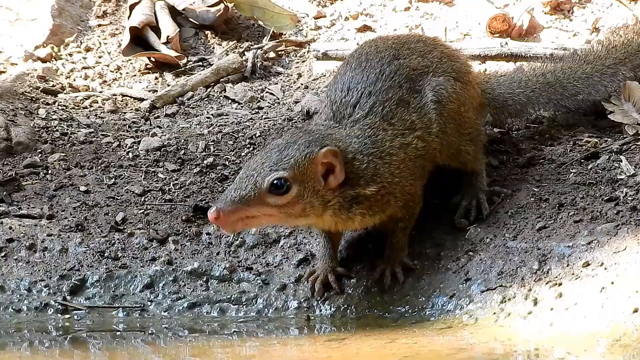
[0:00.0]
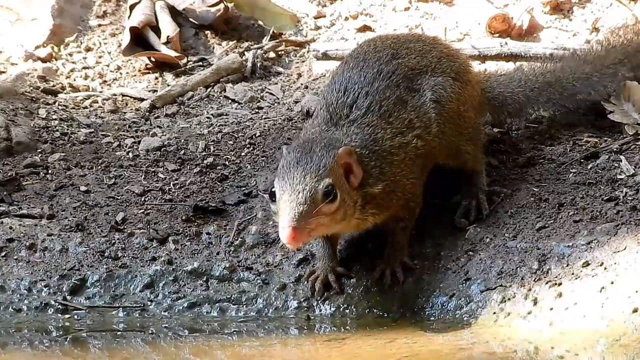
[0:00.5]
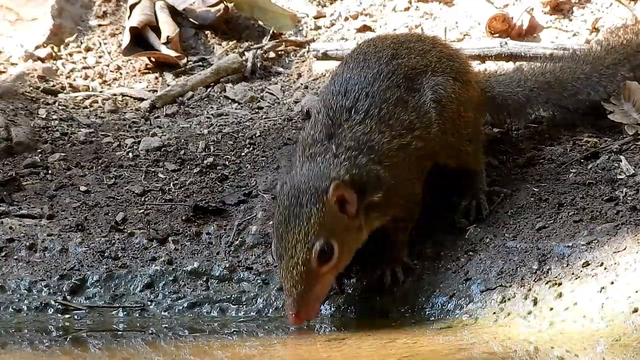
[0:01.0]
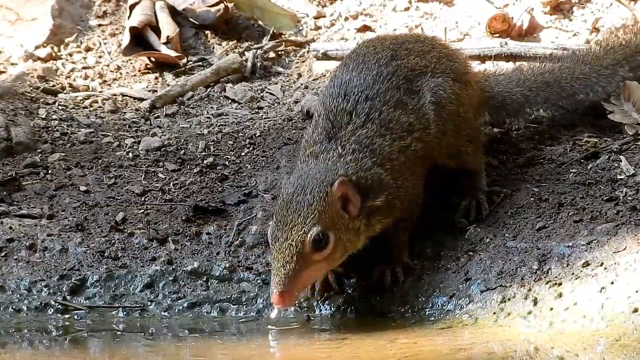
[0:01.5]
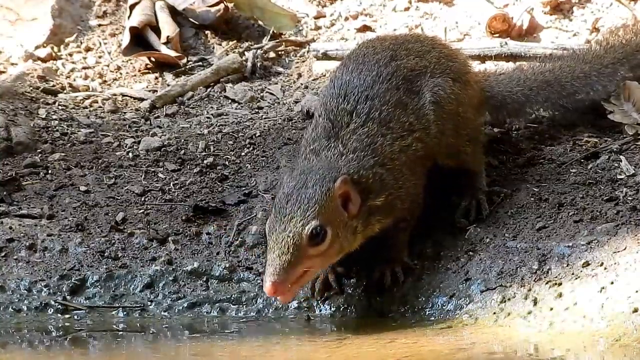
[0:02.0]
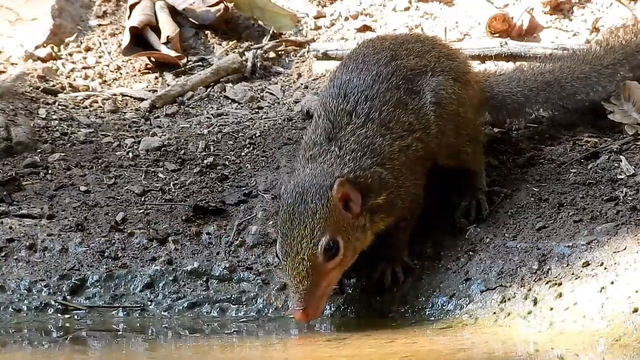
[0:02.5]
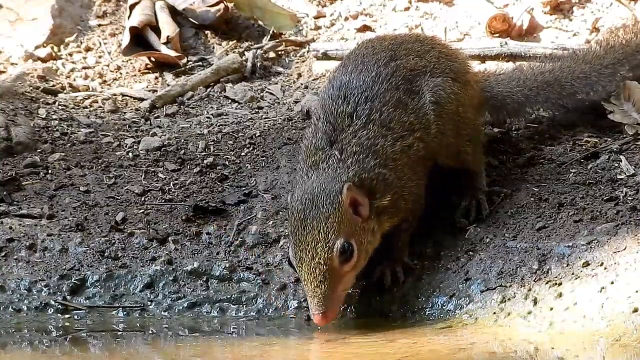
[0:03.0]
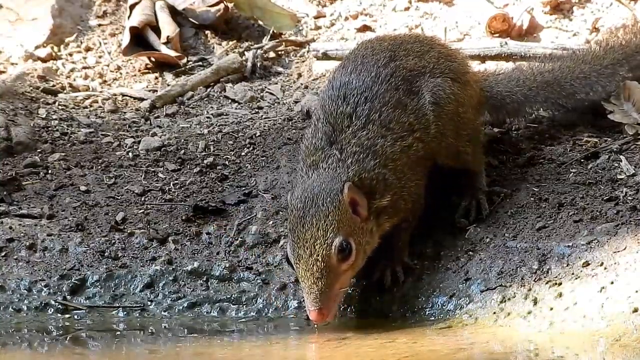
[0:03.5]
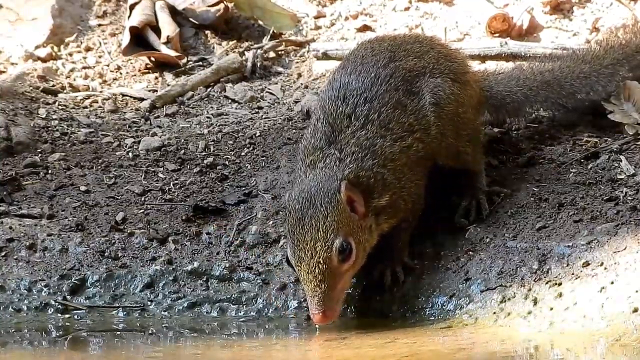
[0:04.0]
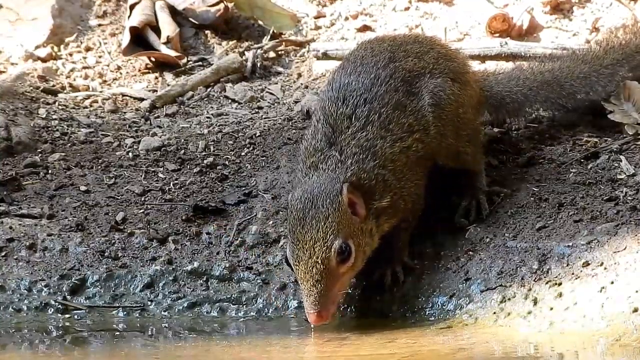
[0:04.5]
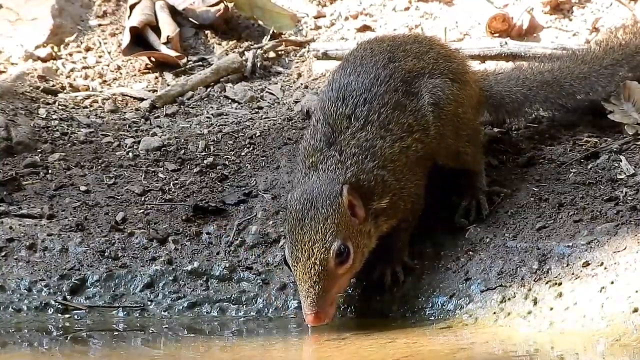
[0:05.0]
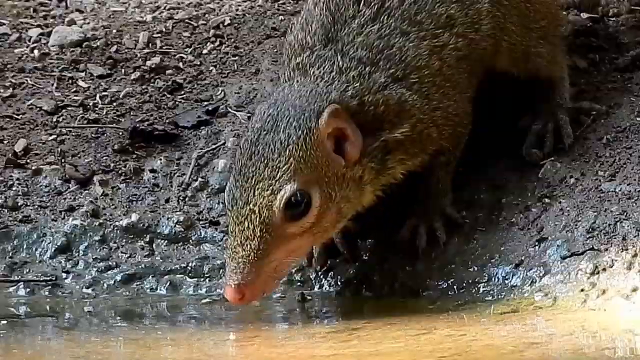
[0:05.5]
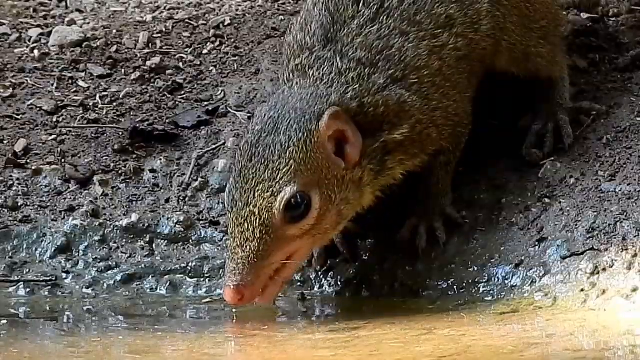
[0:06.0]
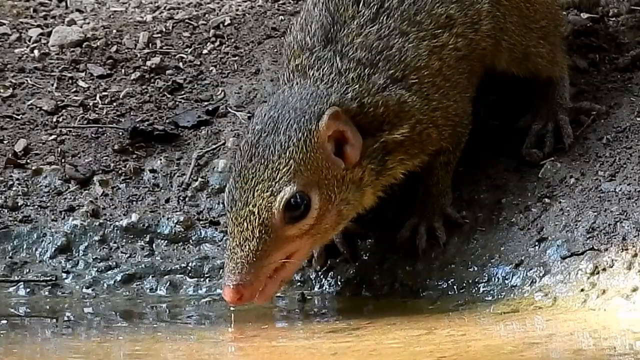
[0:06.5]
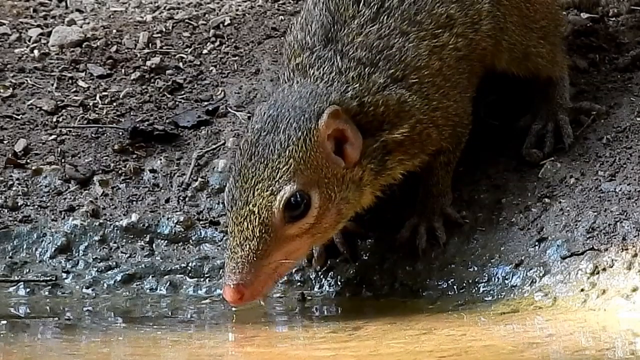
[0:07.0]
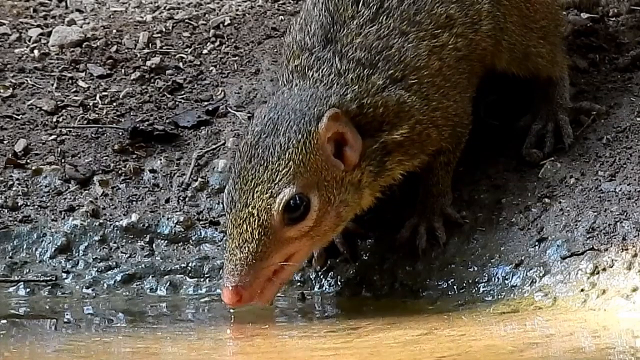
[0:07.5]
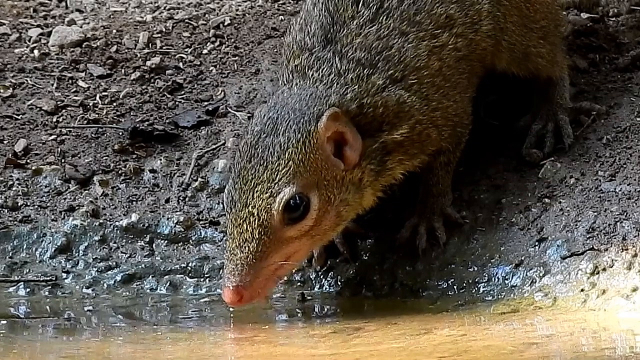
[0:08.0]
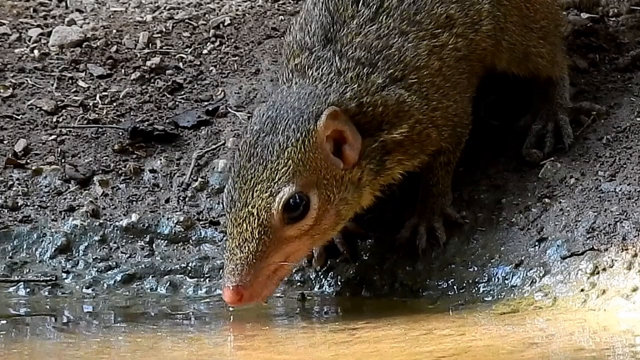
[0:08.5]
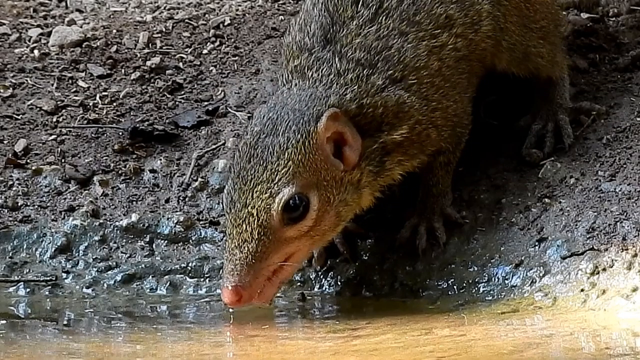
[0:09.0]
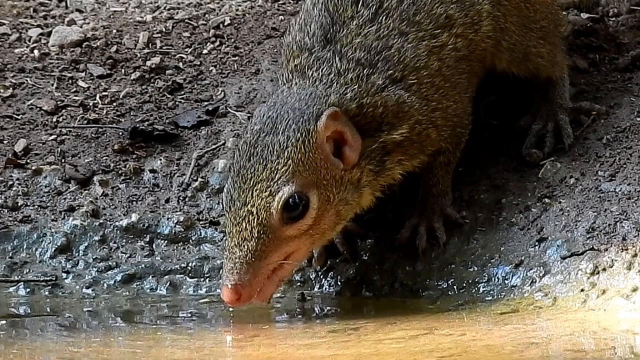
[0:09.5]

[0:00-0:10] A shrew drinks water from a small pond. The shrew is beige, brown and black, with a fluffy tail, a pink nose and pink ears. It stands on the edge of the small pond, which is at an angle of about 35 degrees, and its claws are visible holding it from sliding into the water. The dirt and rocks surrounding the water are wet near the pond's edge and dry further away. A shadow covers the section where the shrew stands, with direct sunlight in the distance. Twigs, branches, curled-up brown leaves, rocks and bits of detritus are on the ground. The video then switches to slow motion, showing the shrew slowly lapping up the water with its tongue.